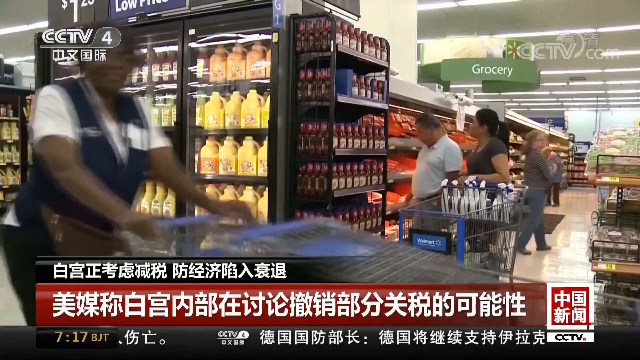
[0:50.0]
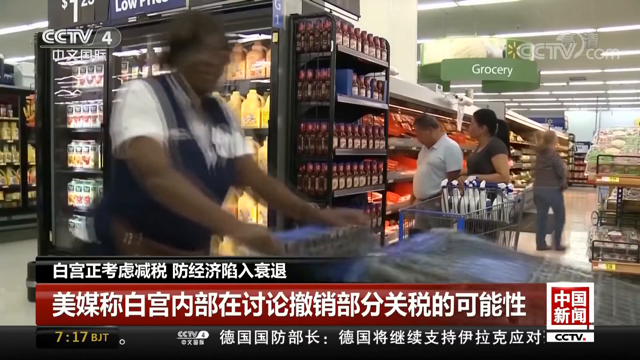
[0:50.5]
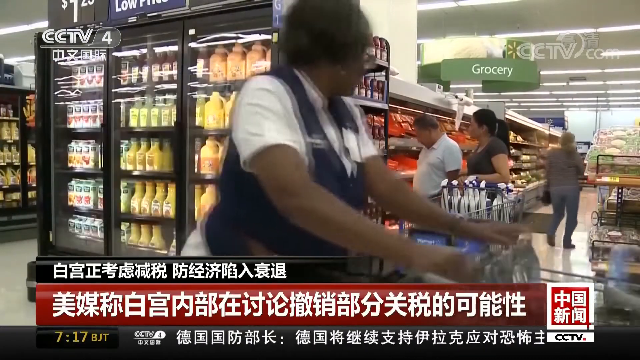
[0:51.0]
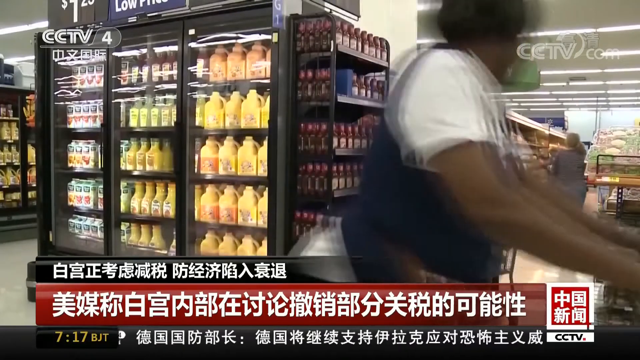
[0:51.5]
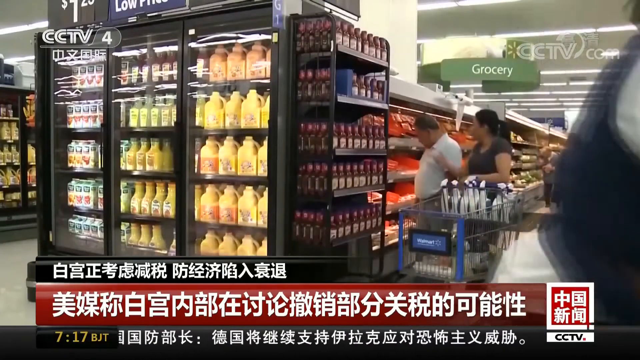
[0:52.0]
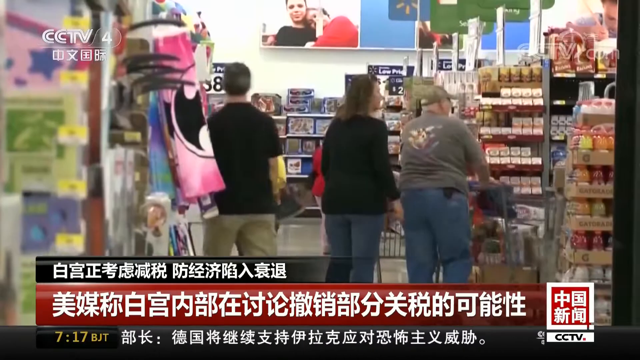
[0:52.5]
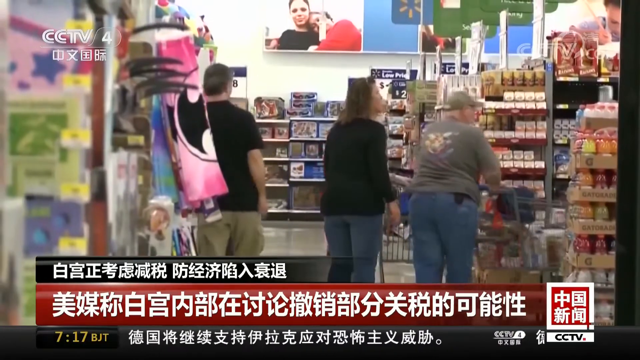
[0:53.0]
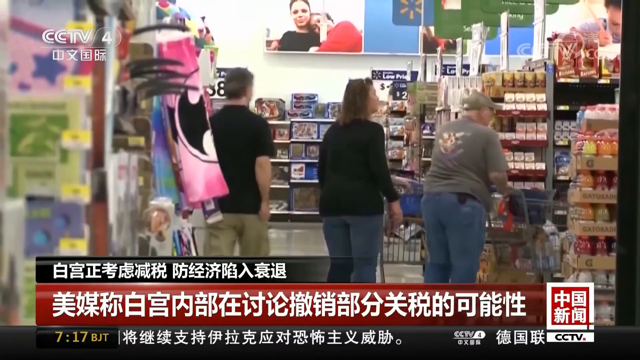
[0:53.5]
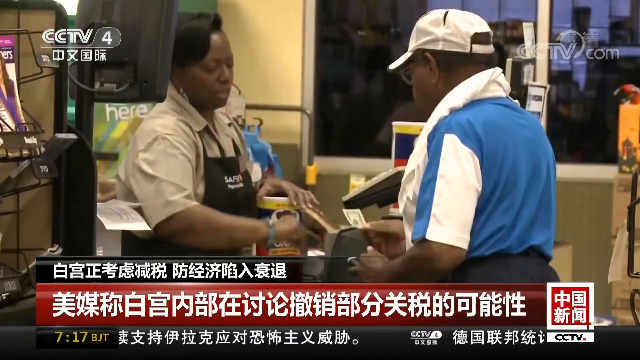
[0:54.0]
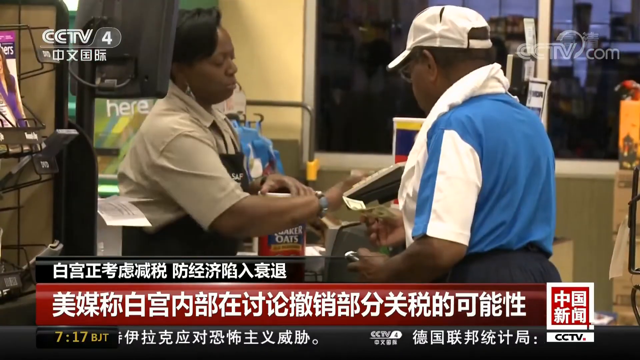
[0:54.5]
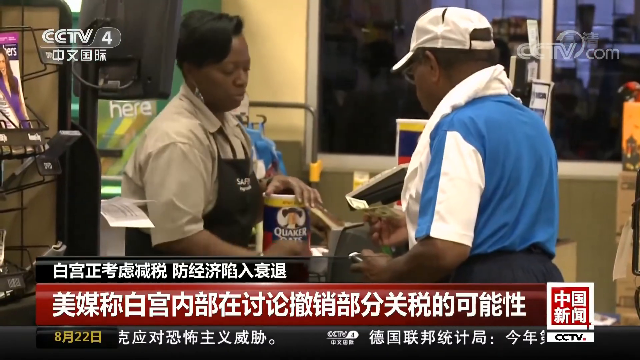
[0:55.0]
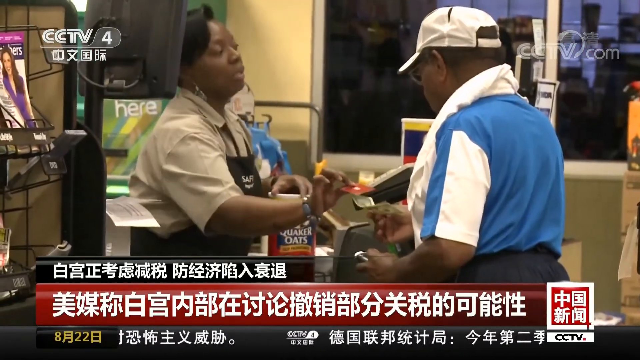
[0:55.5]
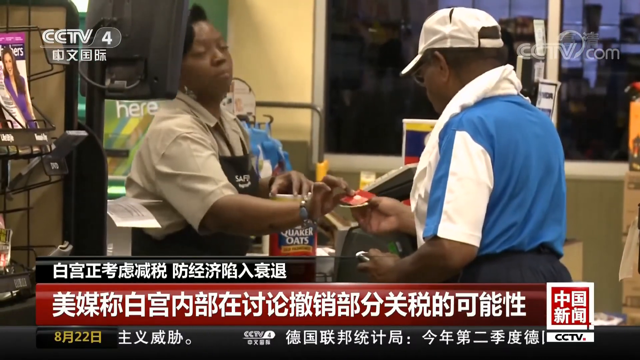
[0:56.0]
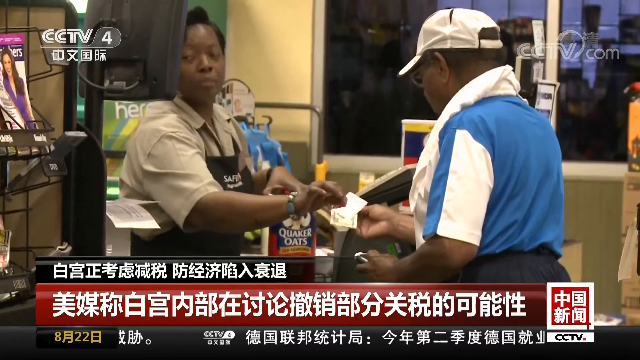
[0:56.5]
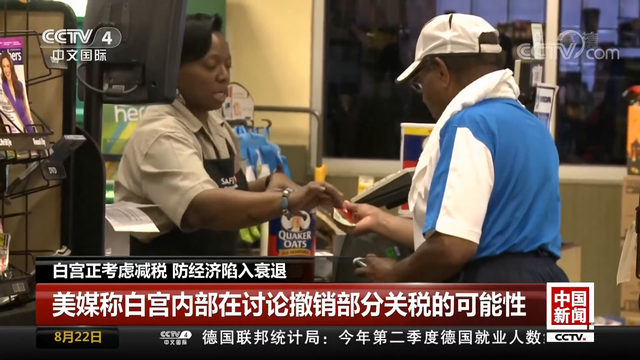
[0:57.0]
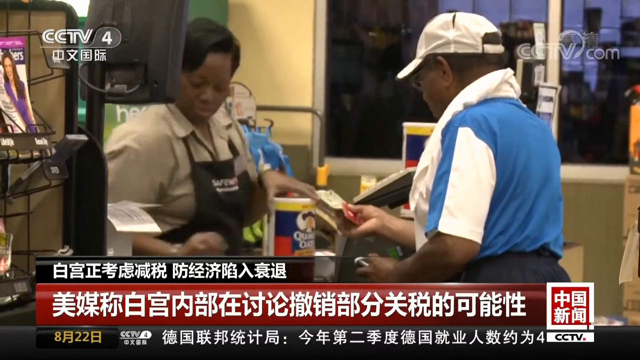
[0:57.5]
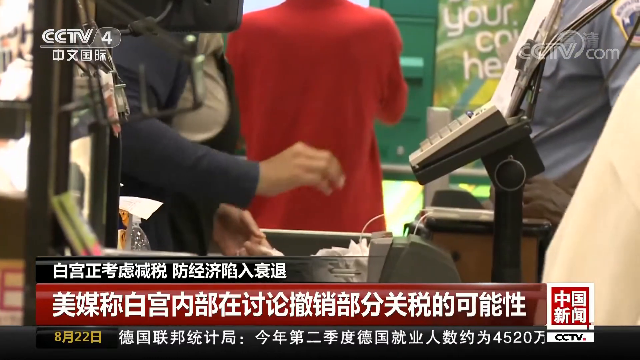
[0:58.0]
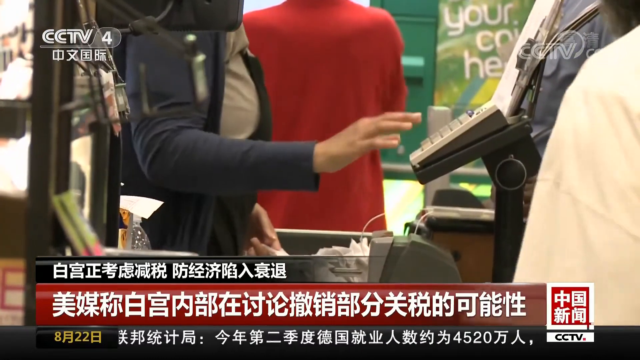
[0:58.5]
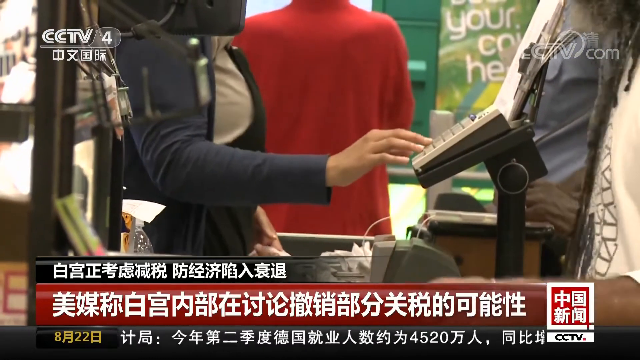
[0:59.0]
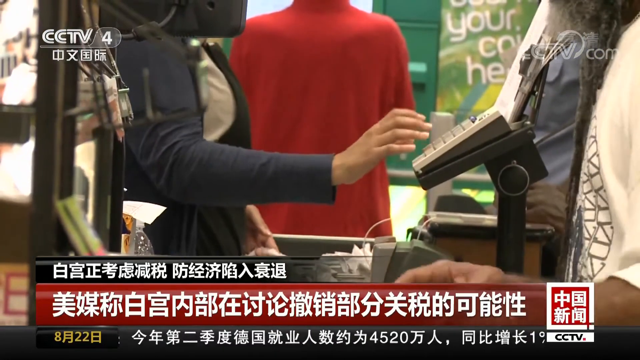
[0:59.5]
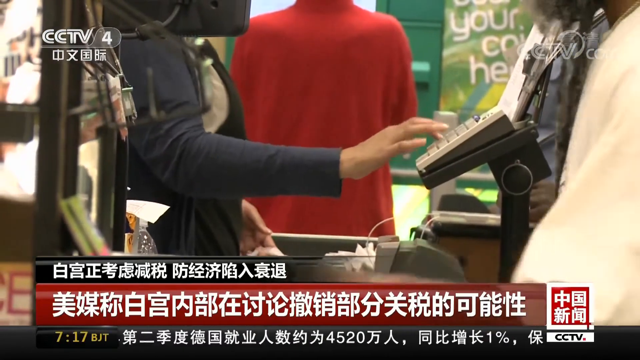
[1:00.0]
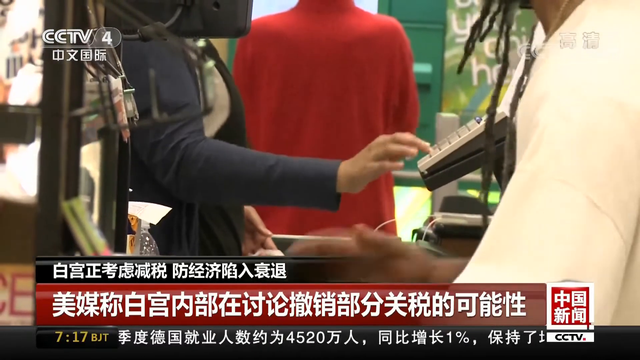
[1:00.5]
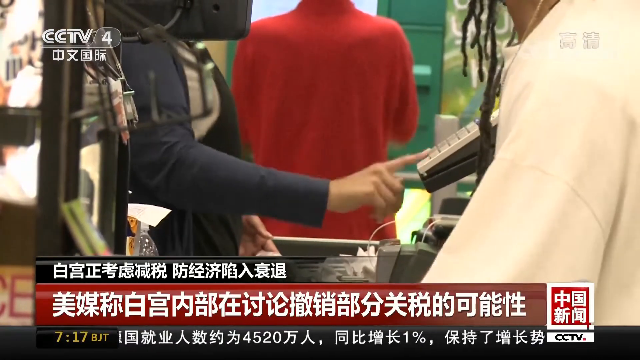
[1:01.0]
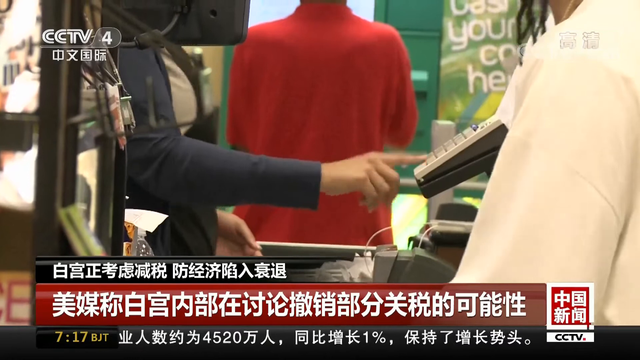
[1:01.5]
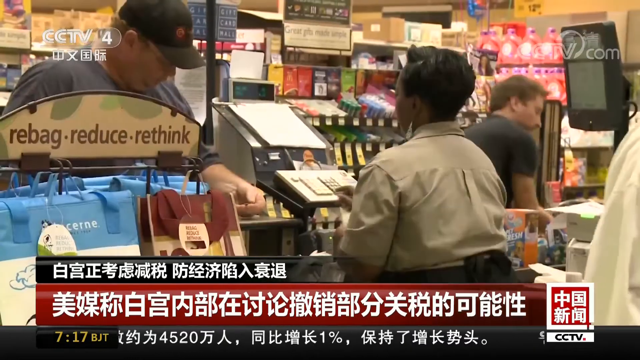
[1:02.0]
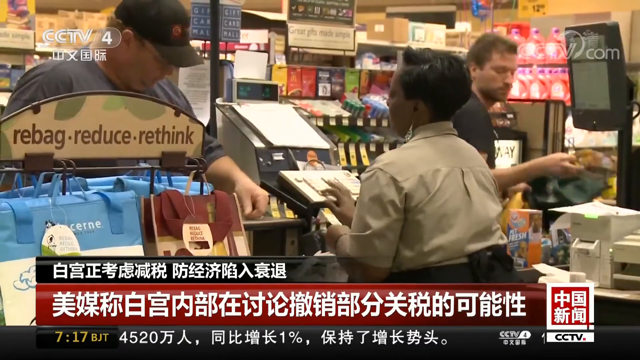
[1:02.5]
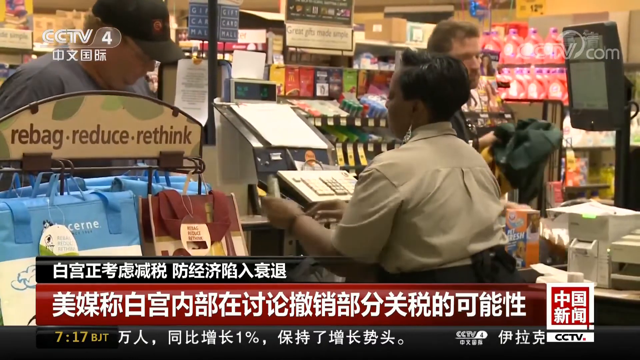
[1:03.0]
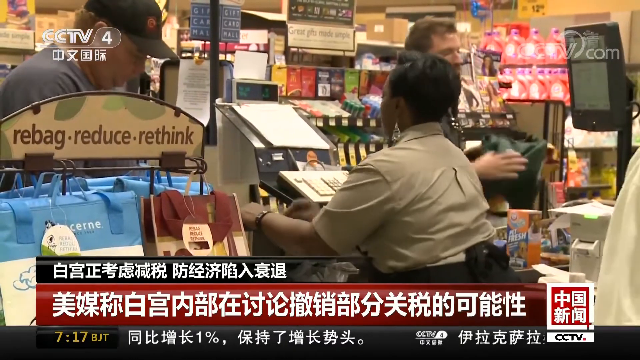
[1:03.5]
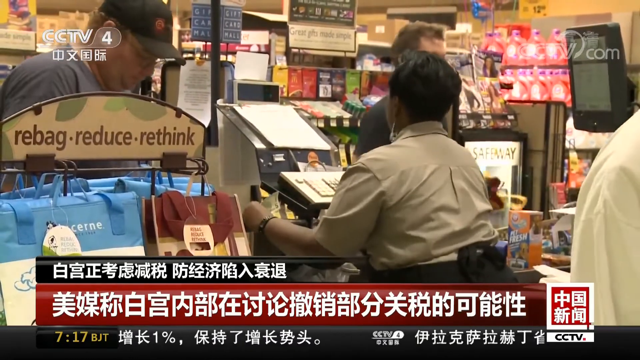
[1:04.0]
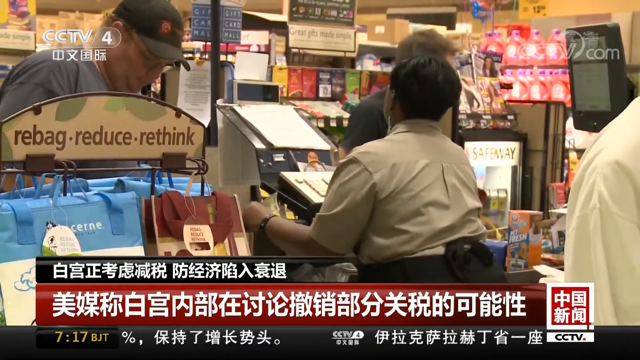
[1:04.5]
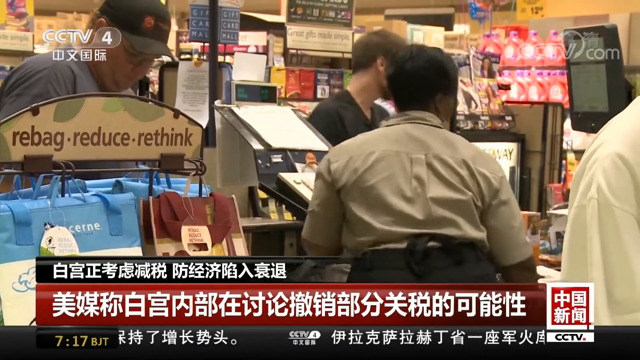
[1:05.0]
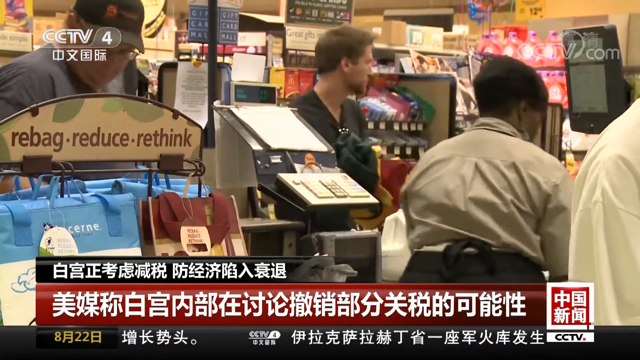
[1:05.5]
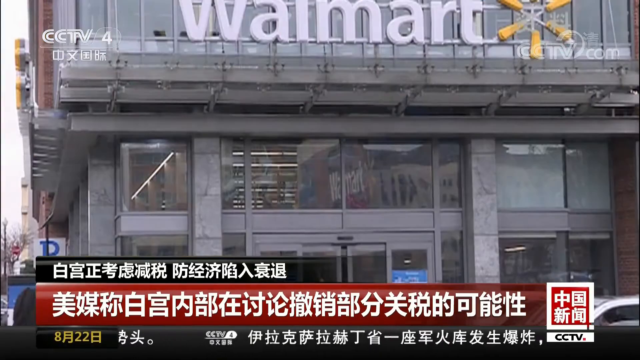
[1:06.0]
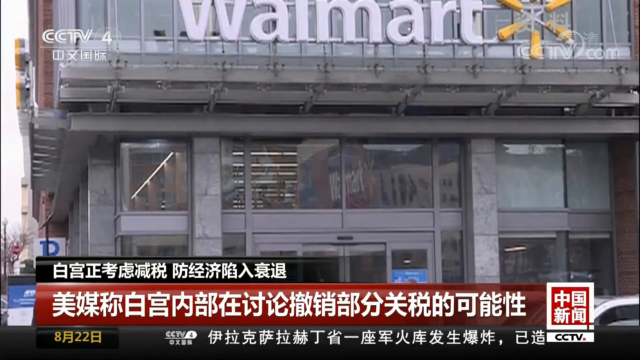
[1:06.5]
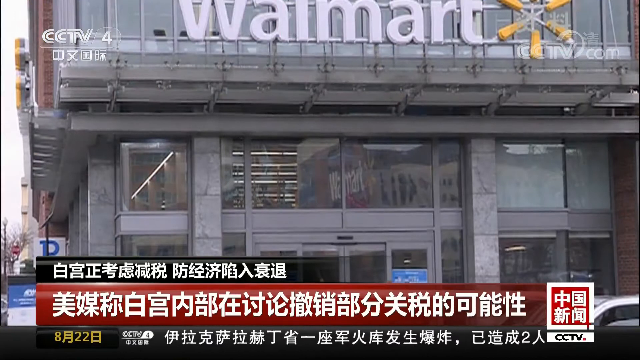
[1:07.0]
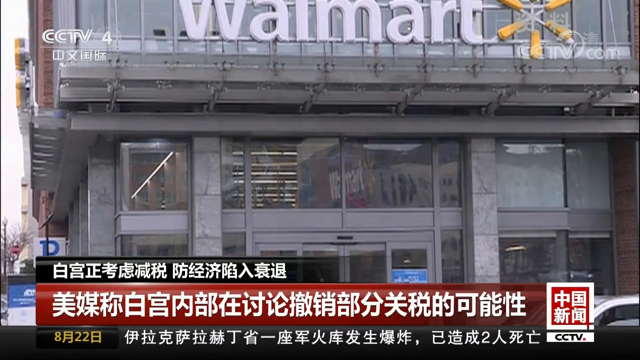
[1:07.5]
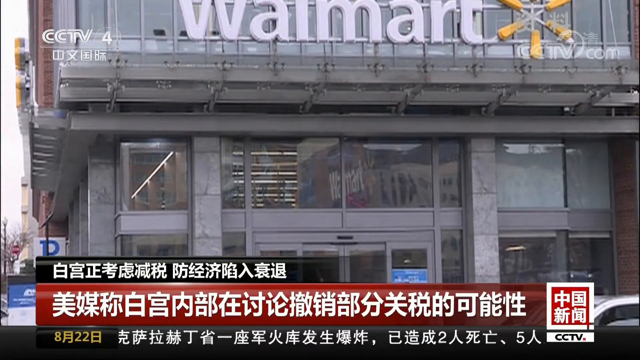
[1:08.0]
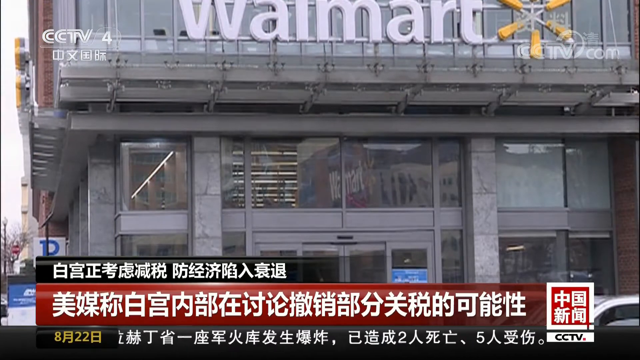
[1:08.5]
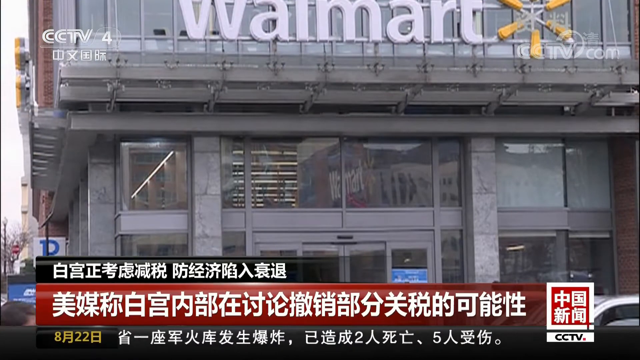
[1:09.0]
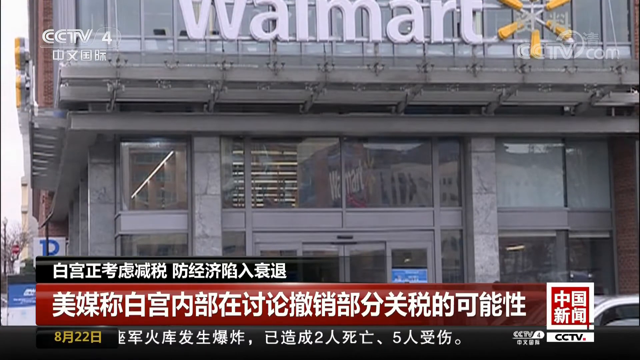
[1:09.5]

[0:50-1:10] The grocery store scene continues, with some people walking by the camera. The camera films what looks like an end cap against a wall, with signage in the same sort of font commonly used for aisle names. The camera points at an orange juice end cap, then a bit more at some people. It then records a cashier checking out someone, and then another cashier. The outside of the Walmart store is shown, with a sort of gray exterior and an entrance that is kind of grayish and white.